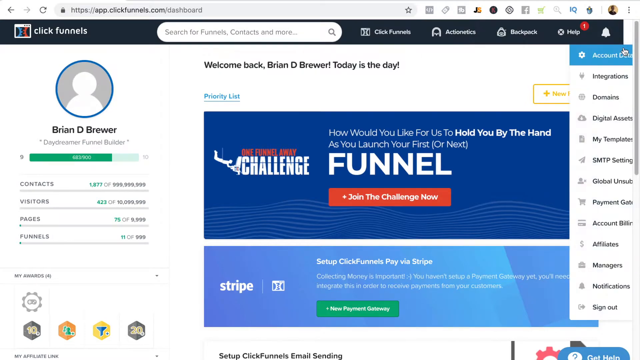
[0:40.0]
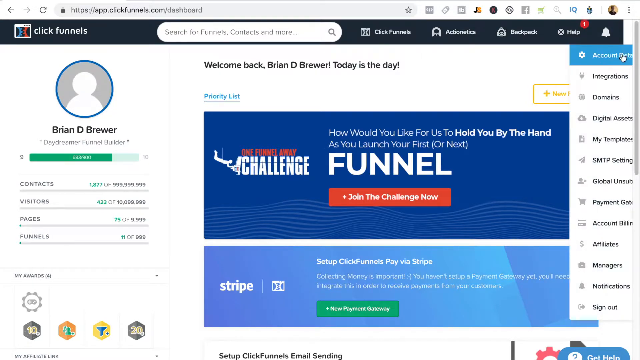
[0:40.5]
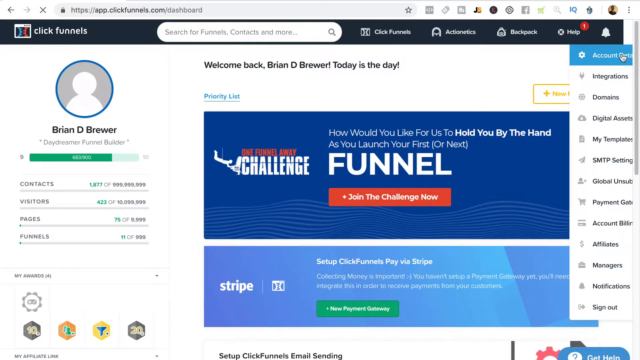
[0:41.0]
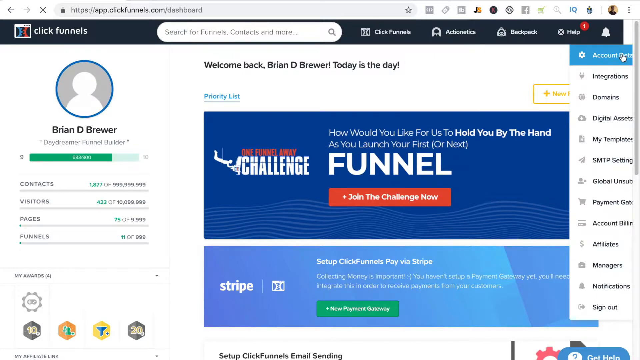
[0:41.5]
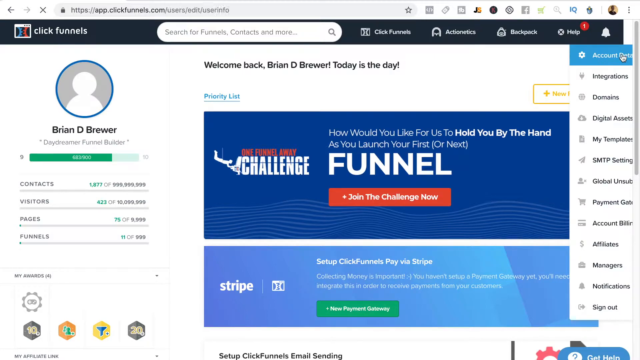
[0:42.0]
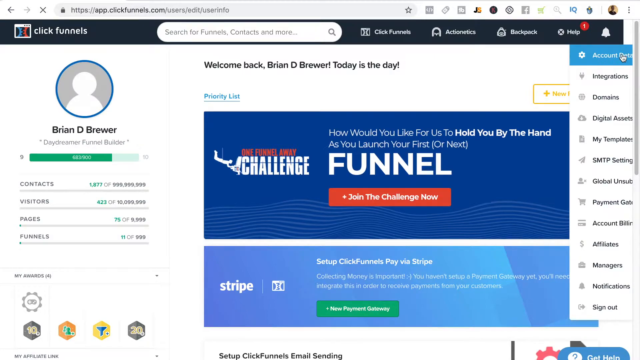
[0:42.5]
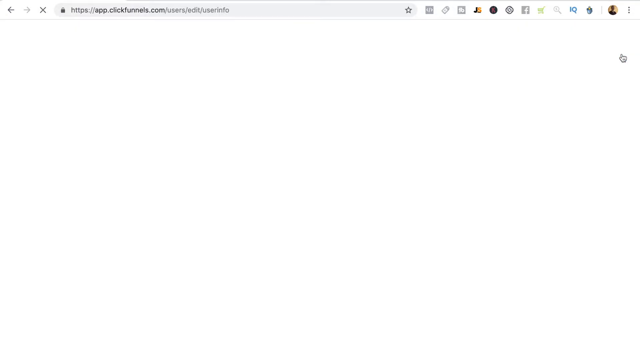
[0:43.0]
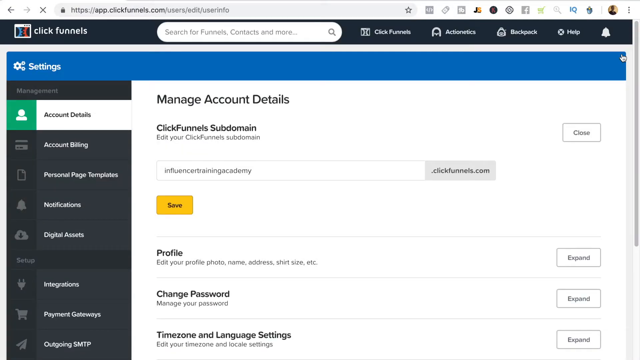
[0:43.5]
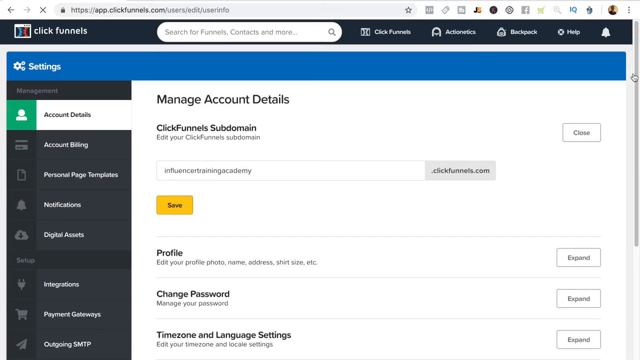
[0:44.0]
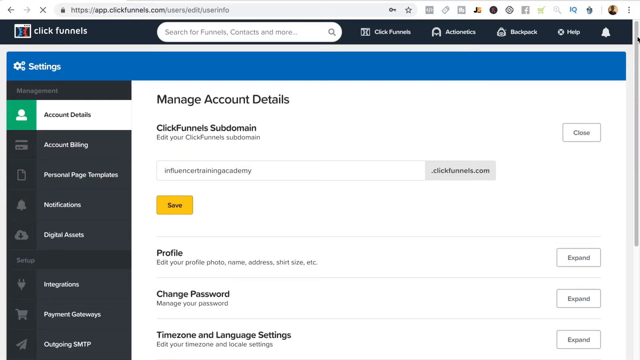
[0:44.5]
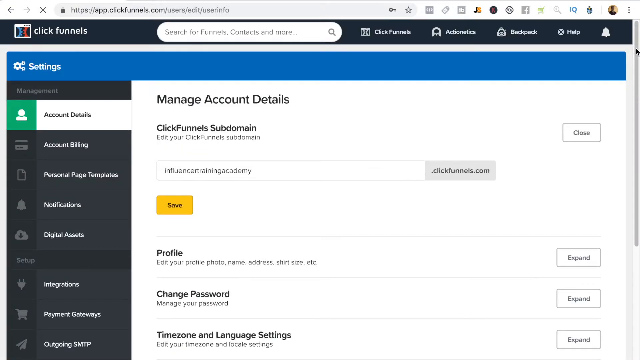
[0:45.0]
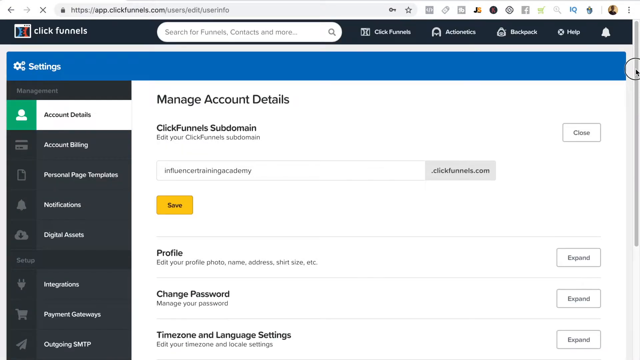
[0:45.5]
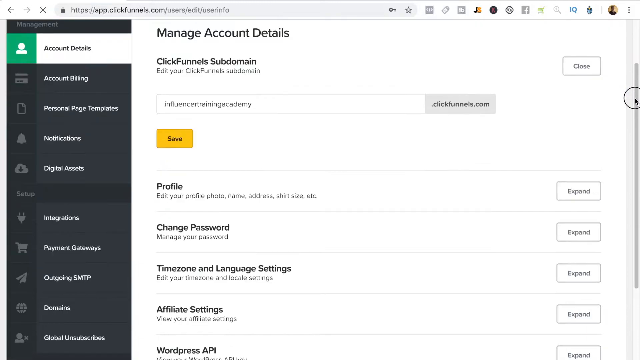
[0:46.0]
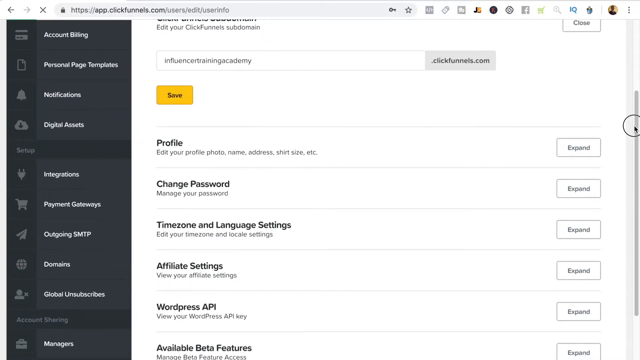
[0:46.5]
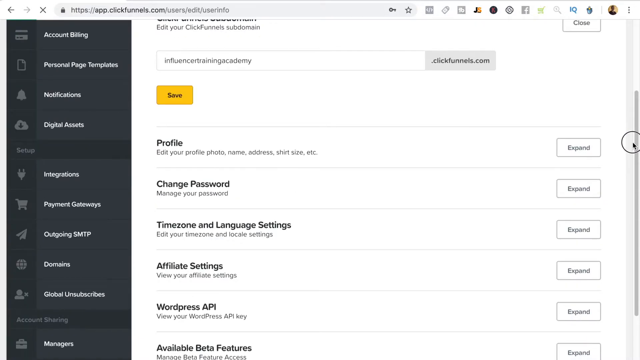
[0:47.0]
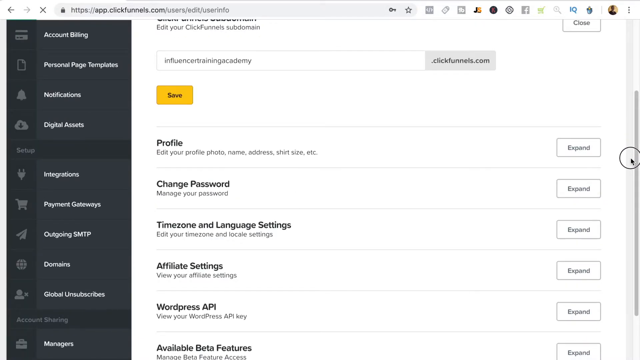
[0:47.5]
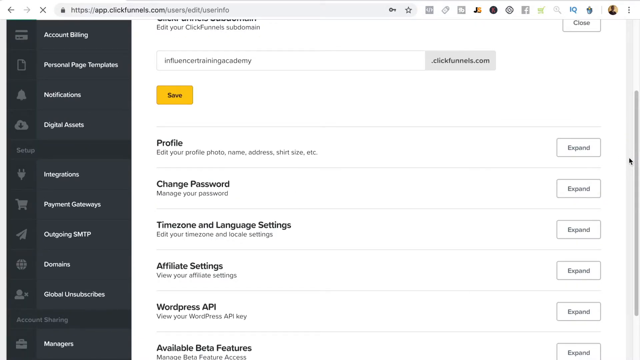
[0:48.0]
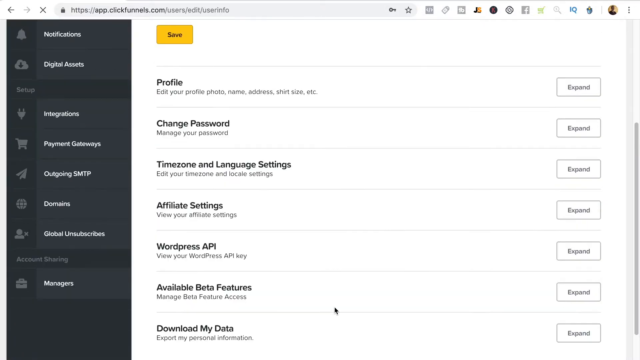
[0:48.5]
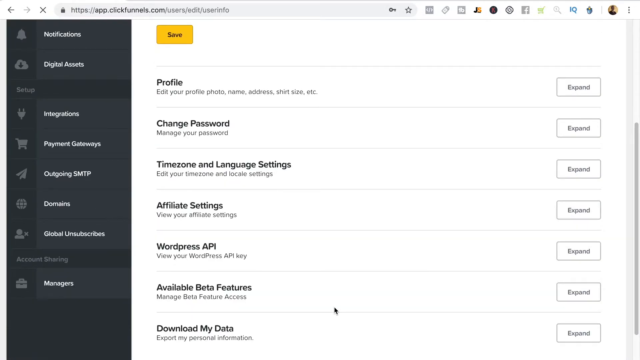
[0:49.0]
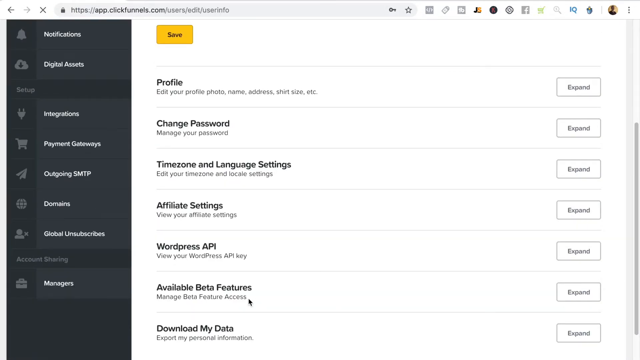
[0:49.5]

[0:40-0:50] The mouse hovers over the space on the far right of the banner, to the right of the notification bell, and over the account details item at the top of the menu that appears there. It clicks on account details, shown by a small circle appearing around the cursor, and the page changes to a new page with a blue banner at the top reading "settings" in white font on the left-hand side. The main page says "manage account details," "clickfunnels subdomain," and "edit your clickfunnels subdomain," with a blank box next to ".clickfunnels.com" and, under that, a yellow box that reads "save."